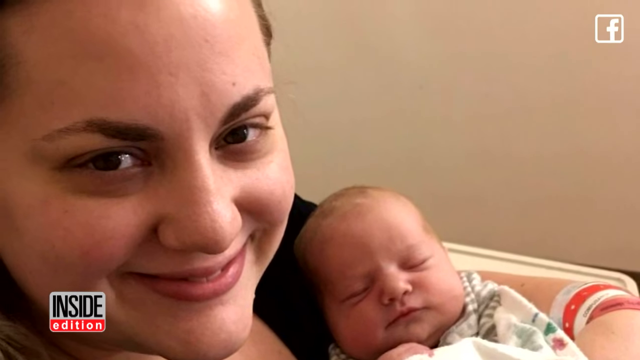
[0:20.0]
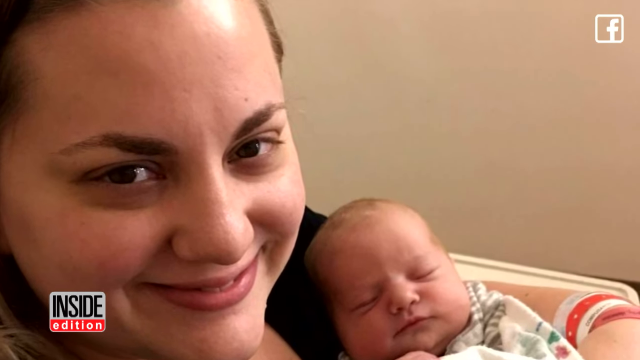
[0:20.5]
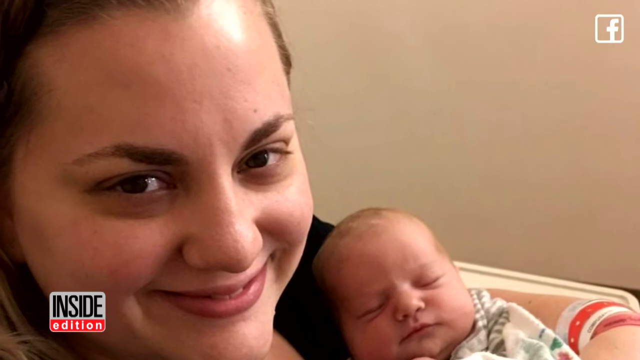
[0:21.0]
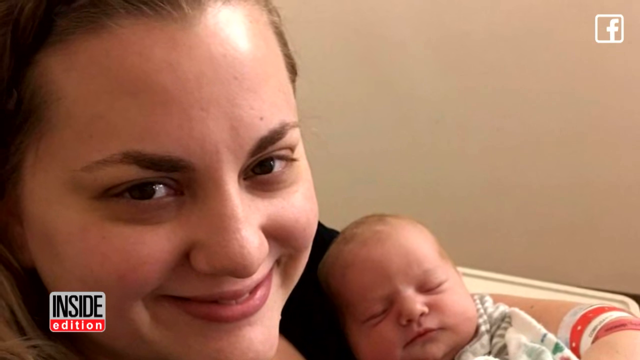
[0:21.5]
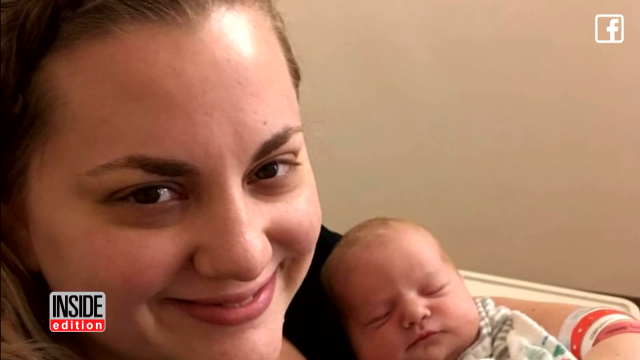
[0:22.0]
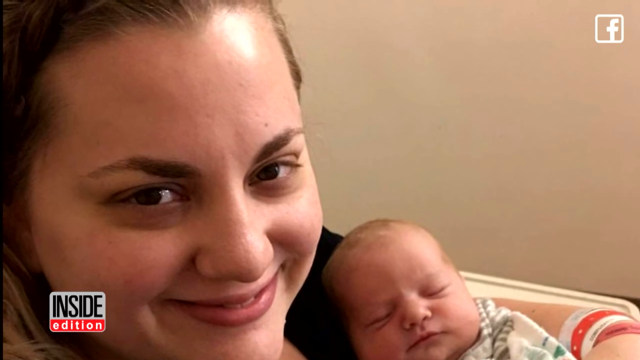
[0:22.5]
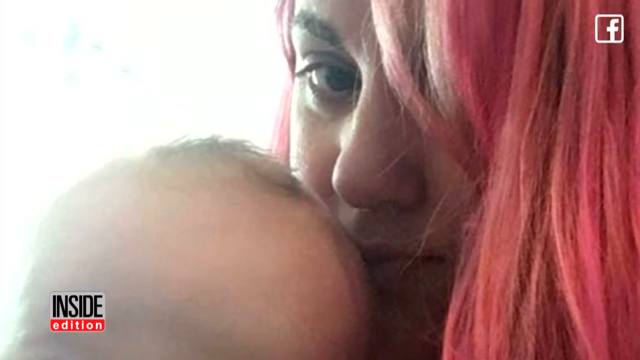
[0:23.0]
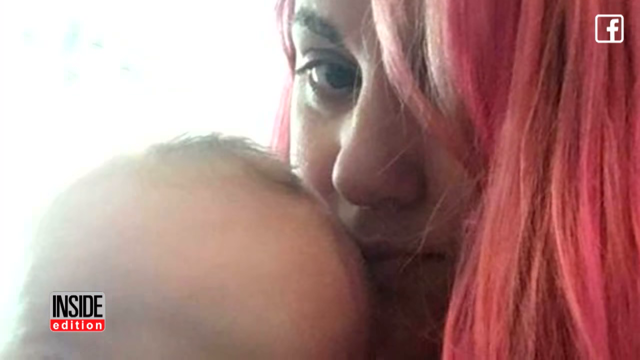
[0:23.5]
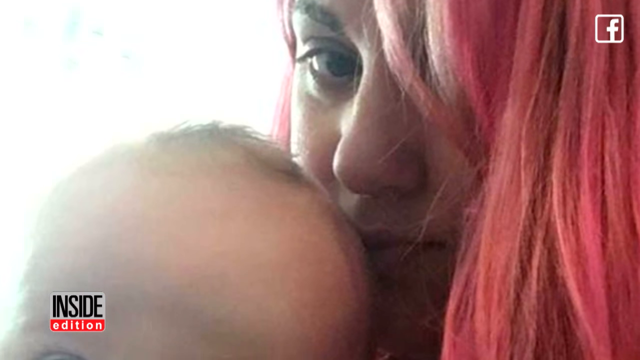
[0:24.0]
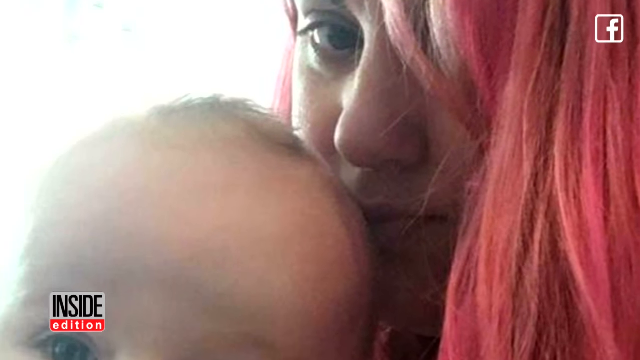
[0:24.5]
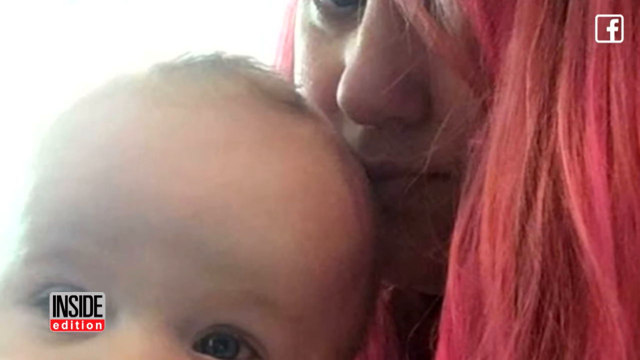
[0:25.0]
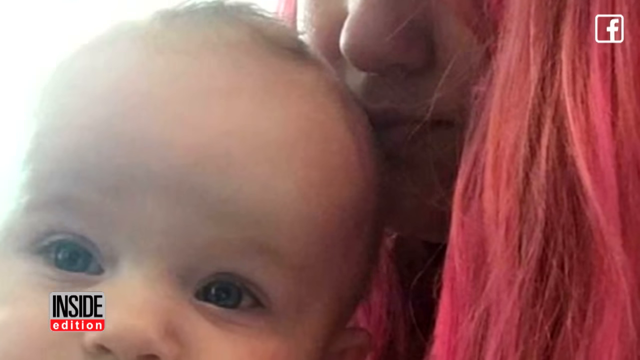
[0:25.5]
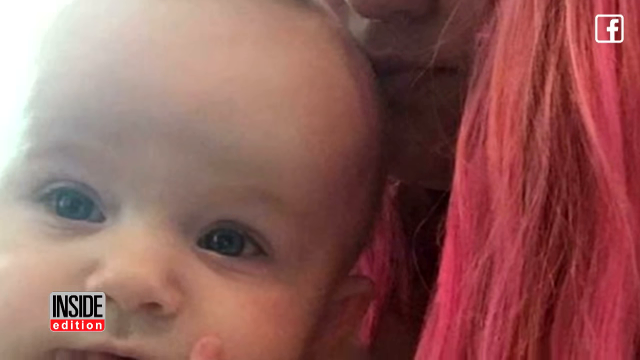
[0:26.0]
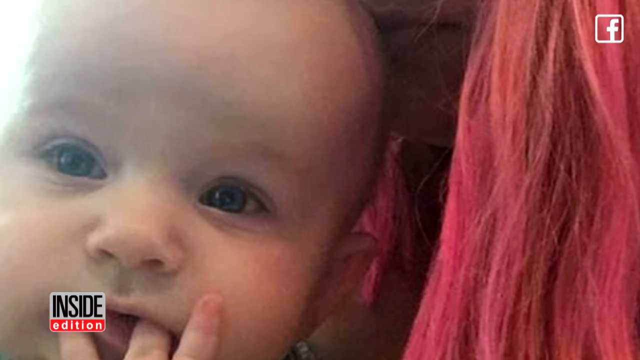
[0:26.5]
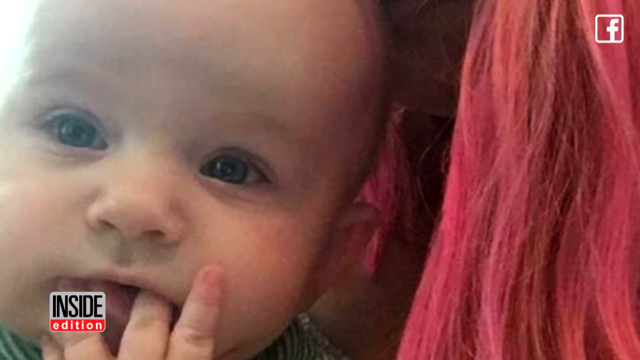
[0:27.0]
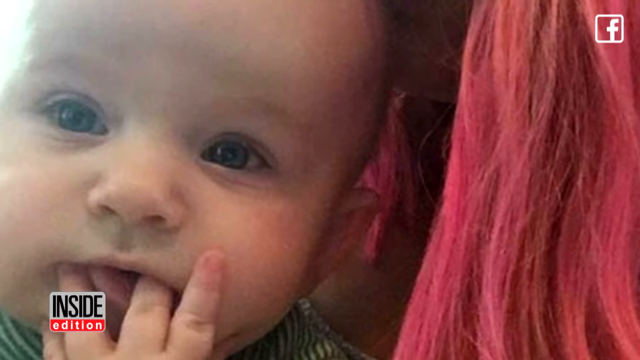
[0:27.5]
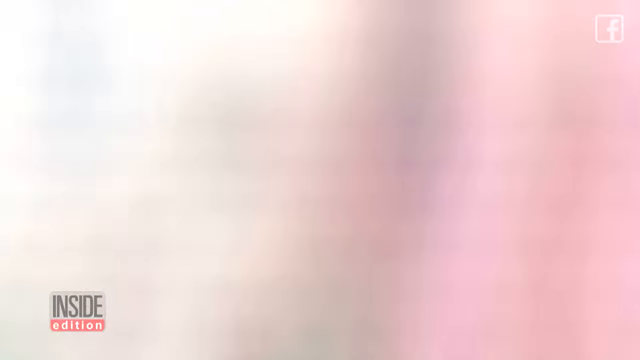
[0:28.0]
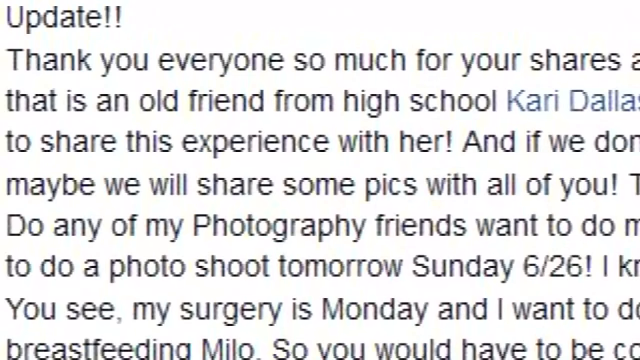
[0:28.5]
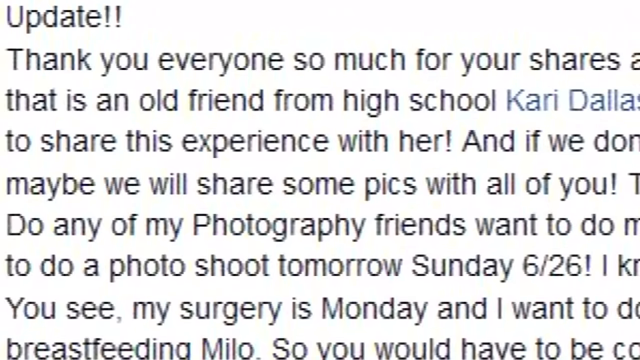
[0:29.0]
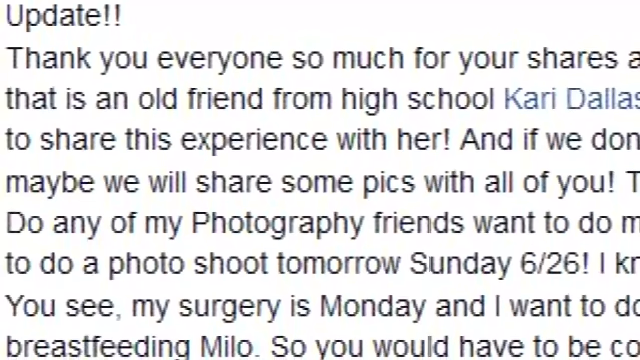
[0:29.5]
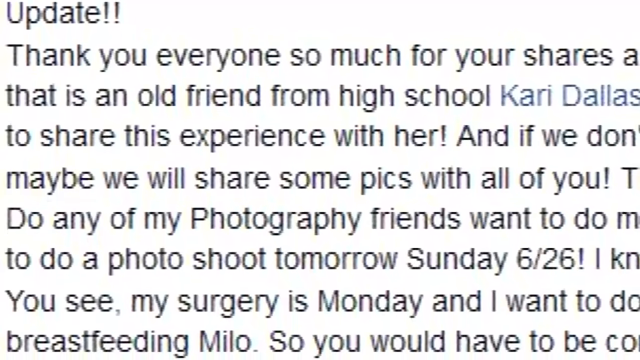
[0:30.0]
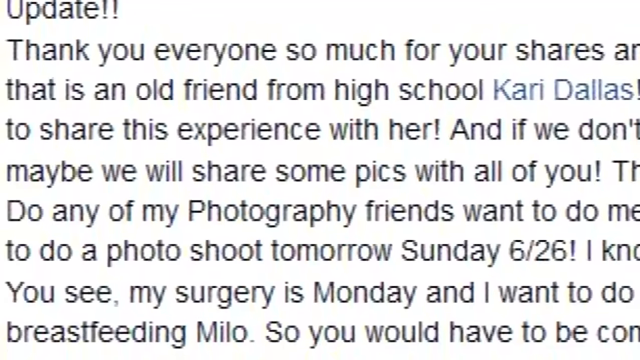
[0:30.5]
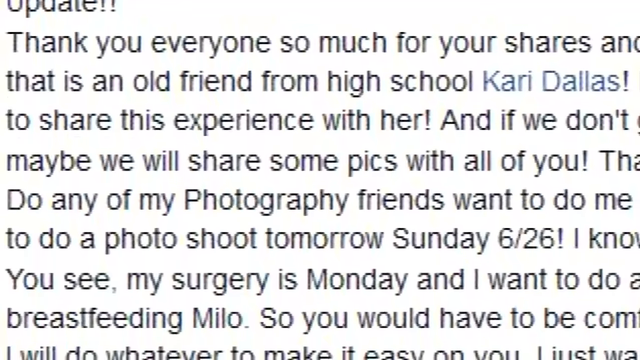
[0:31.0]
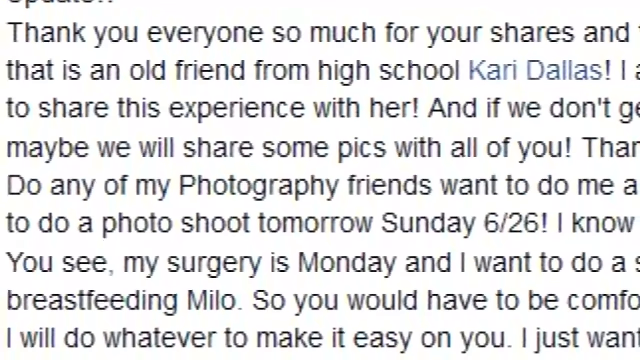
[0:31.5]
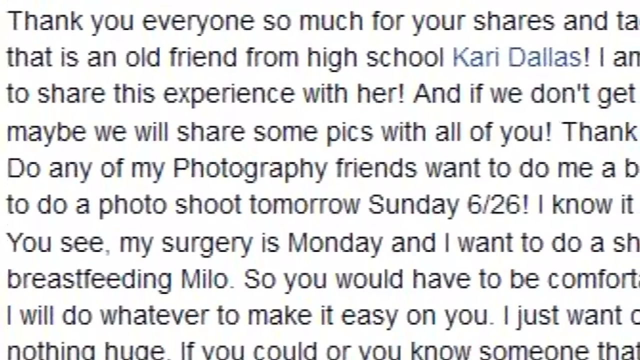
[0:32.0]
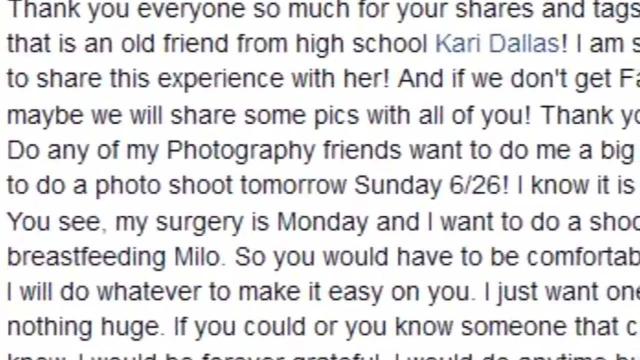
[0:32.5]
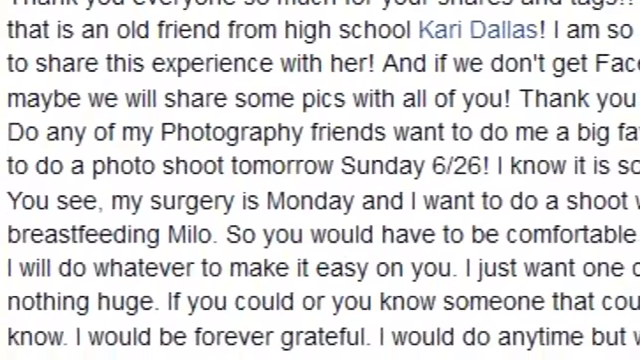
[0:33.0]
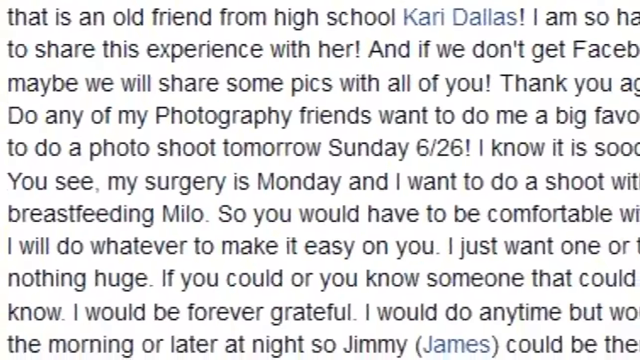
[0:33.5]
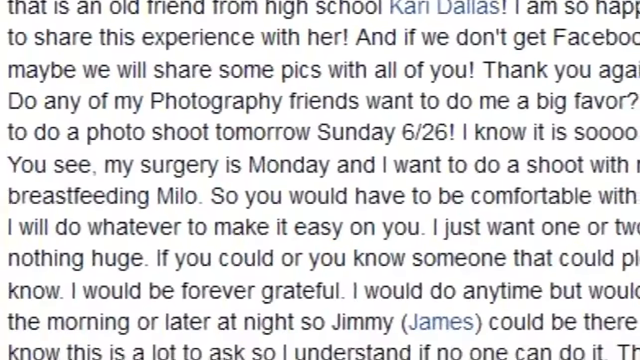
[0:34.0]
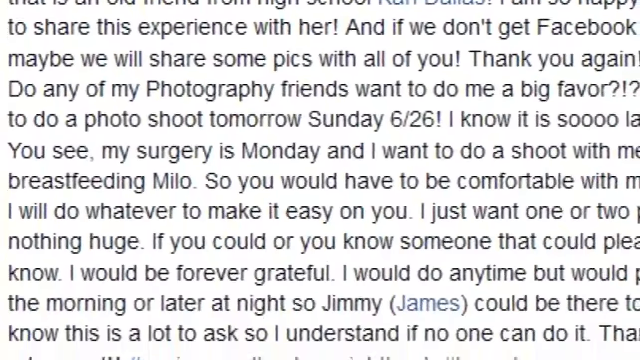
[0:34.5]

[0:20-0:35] Different images of the mom and her baby are shown, the baby getting a little older in one of them. Another image shows a letter, which says "thank you, everyone for your shares" and mentions something about Facebook and something about "my surgery"; it appears to be a Facebook update, apparently written by the mother herself. The letter is hard to read, but the baby's name may be James or Jimmy. The video keeps showing pictures of the baby, and in one picture the mom has bright pink hair. The Inside Edition sign is in the lower left corner, and text in the right corner says you can subscribe.